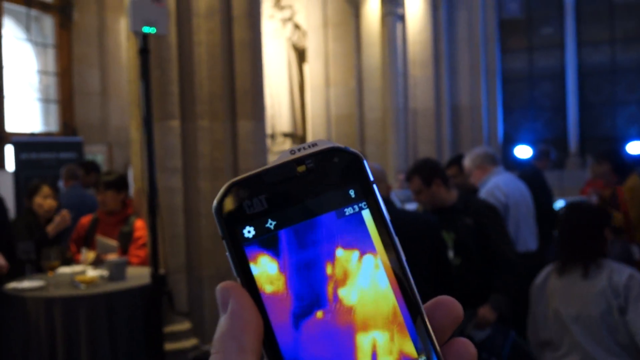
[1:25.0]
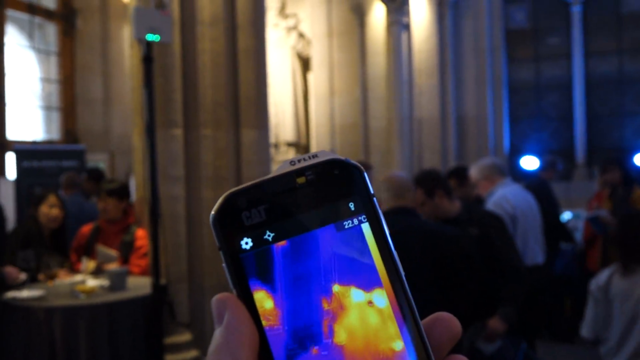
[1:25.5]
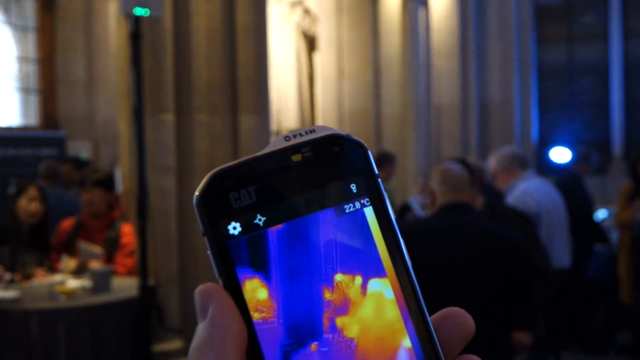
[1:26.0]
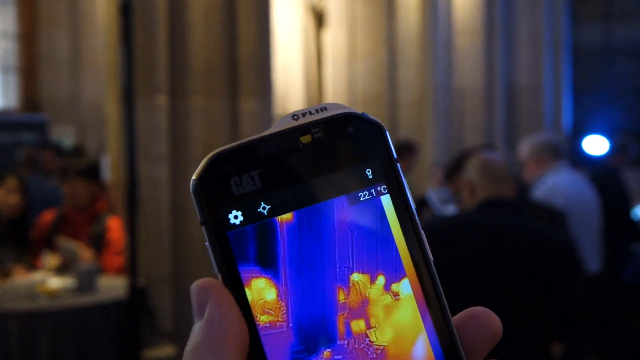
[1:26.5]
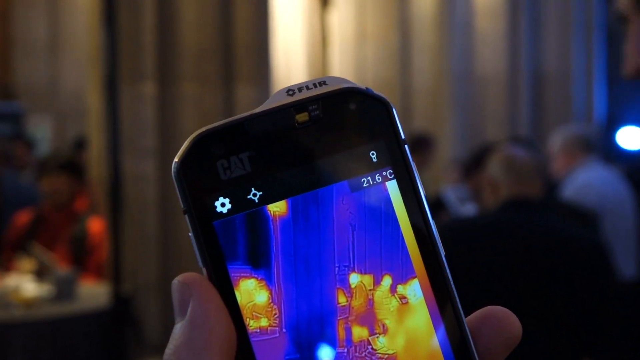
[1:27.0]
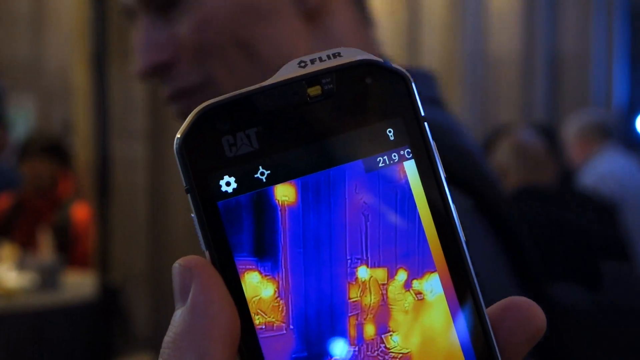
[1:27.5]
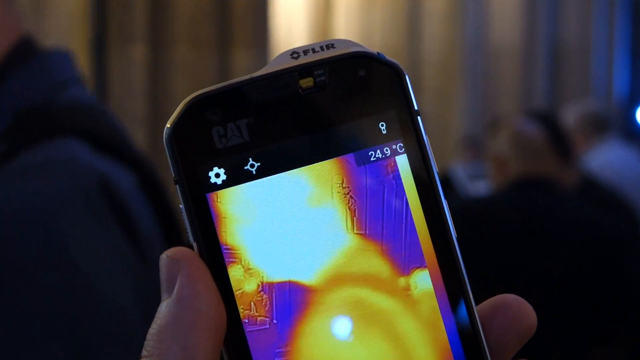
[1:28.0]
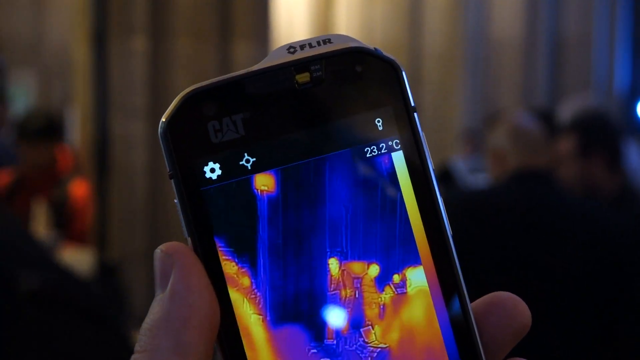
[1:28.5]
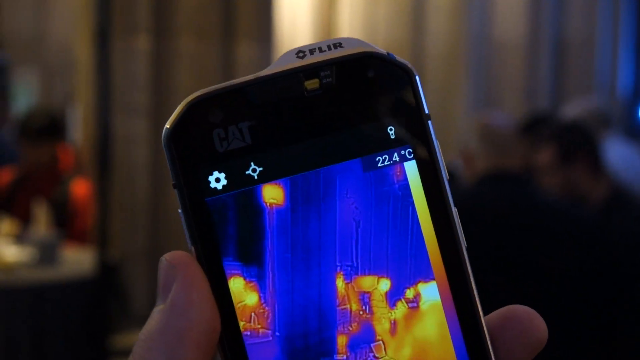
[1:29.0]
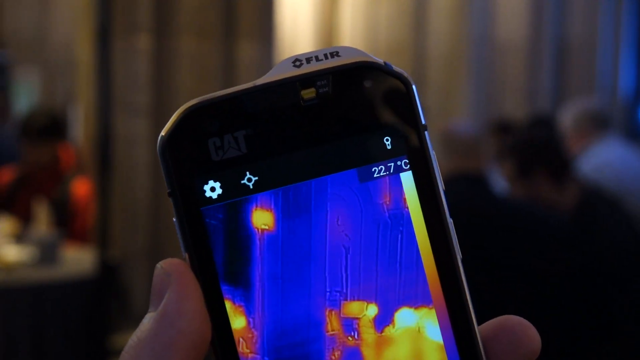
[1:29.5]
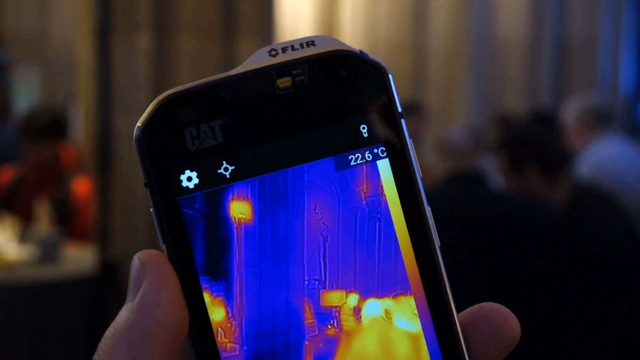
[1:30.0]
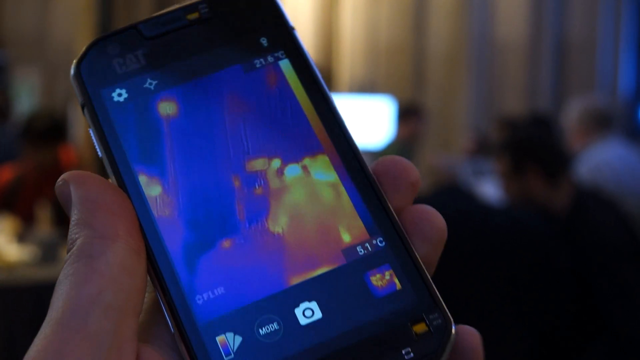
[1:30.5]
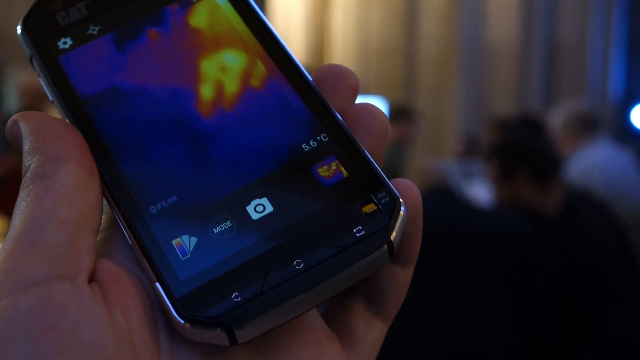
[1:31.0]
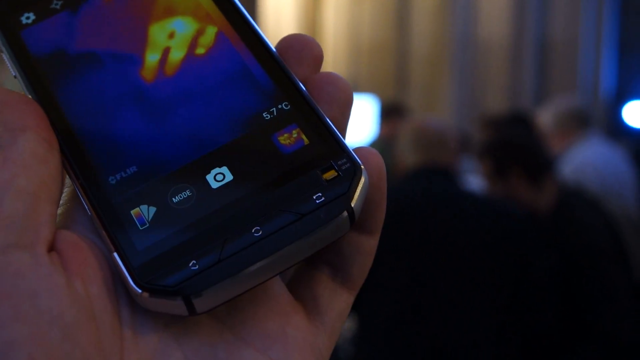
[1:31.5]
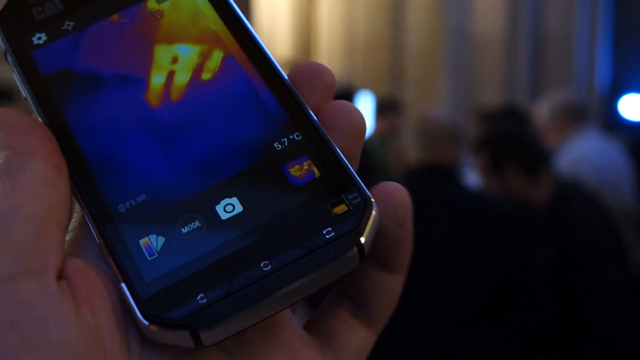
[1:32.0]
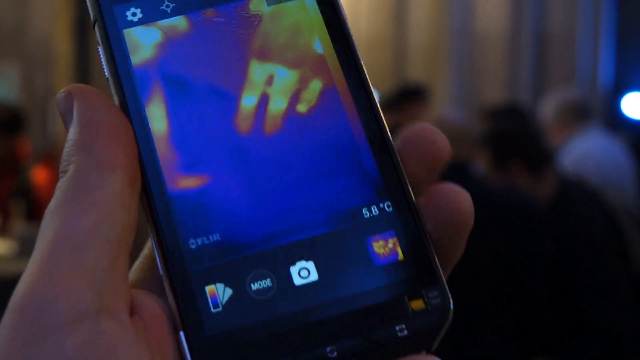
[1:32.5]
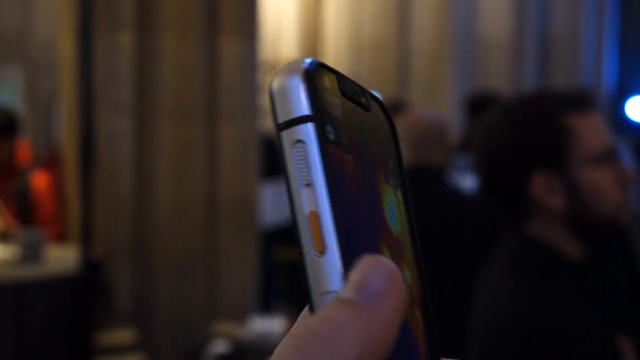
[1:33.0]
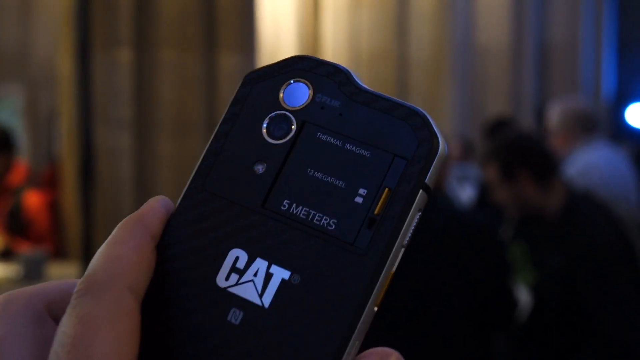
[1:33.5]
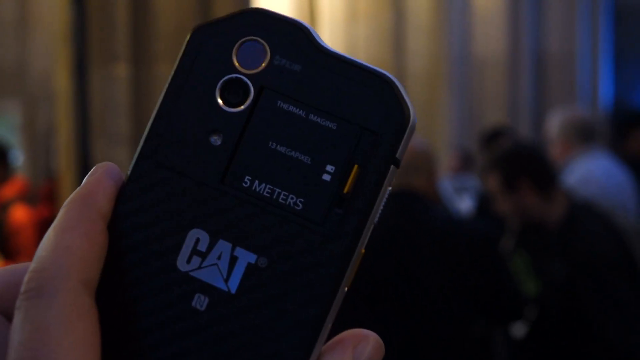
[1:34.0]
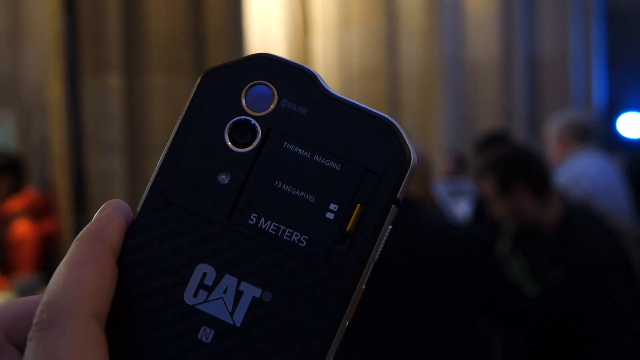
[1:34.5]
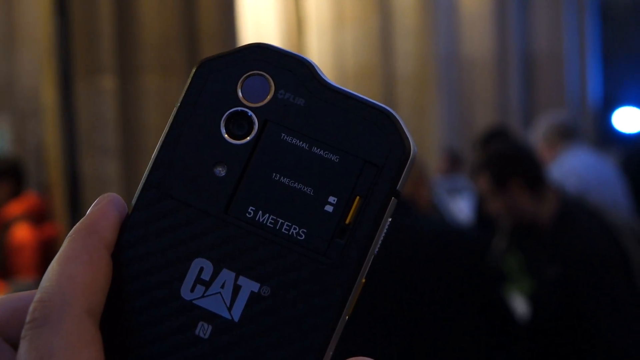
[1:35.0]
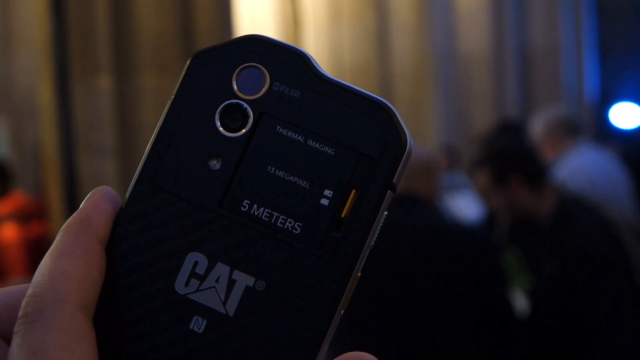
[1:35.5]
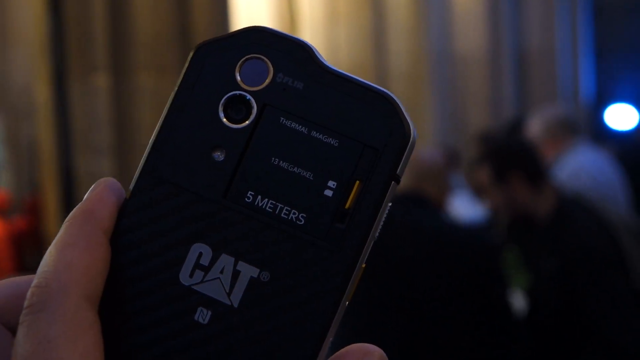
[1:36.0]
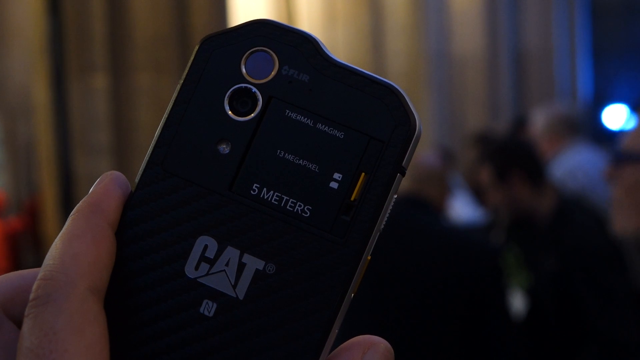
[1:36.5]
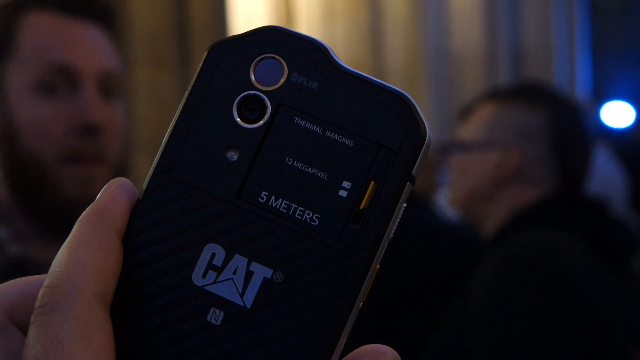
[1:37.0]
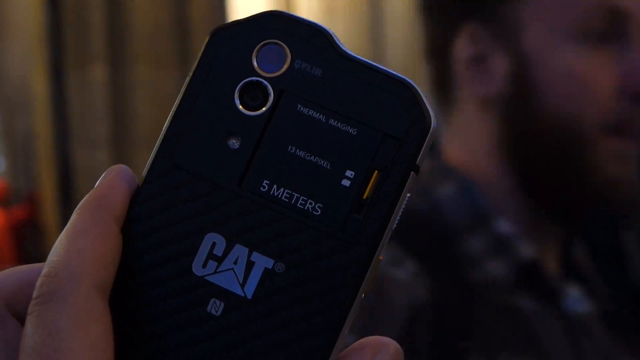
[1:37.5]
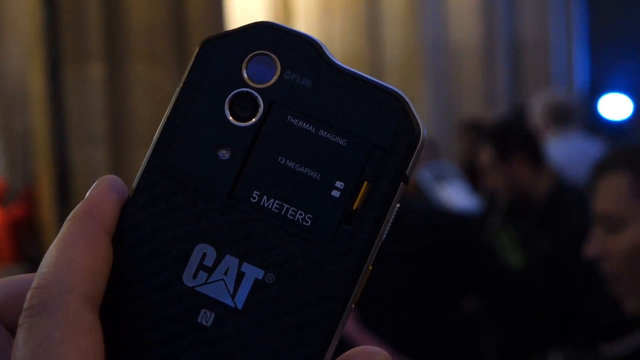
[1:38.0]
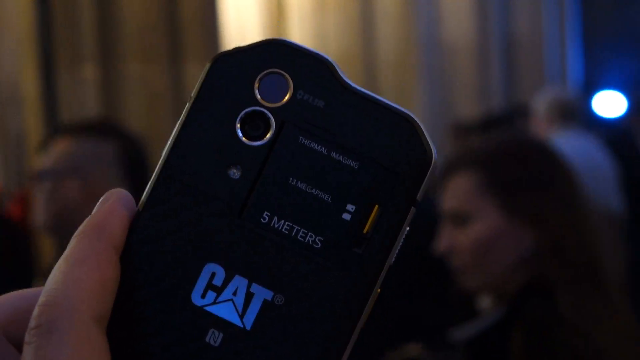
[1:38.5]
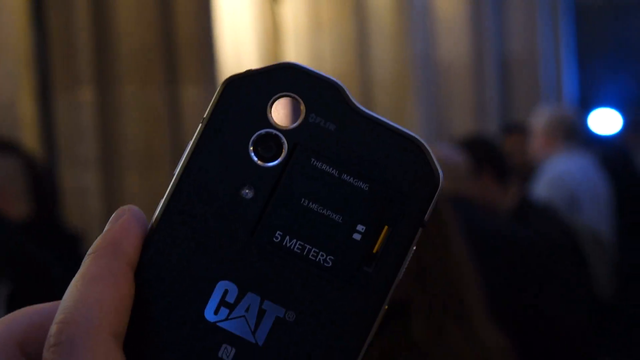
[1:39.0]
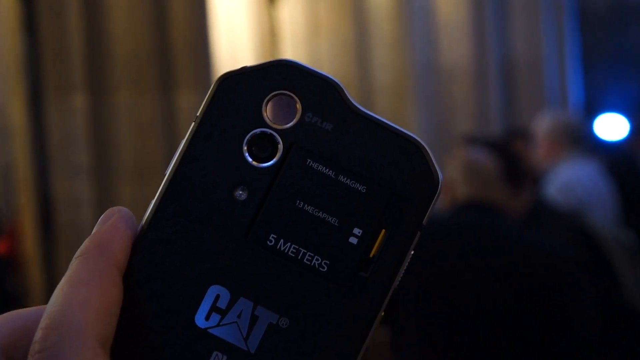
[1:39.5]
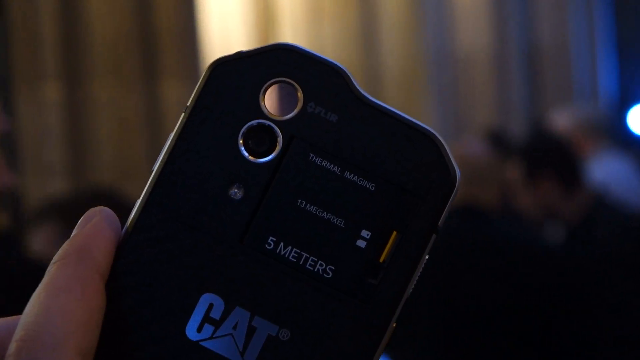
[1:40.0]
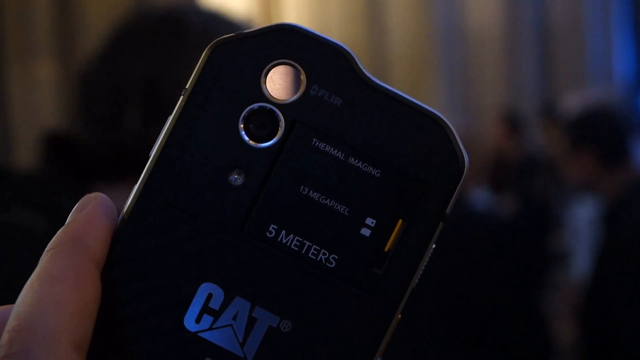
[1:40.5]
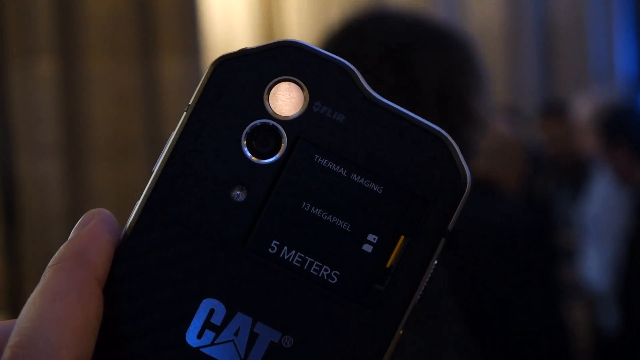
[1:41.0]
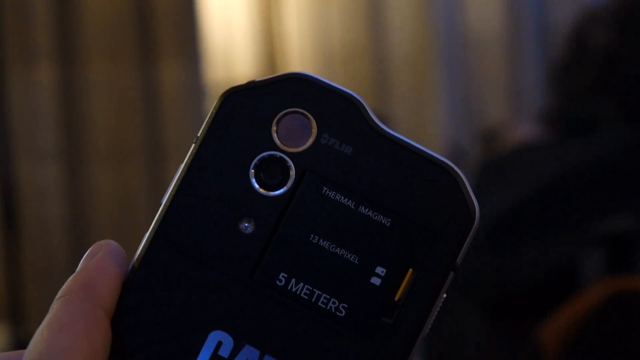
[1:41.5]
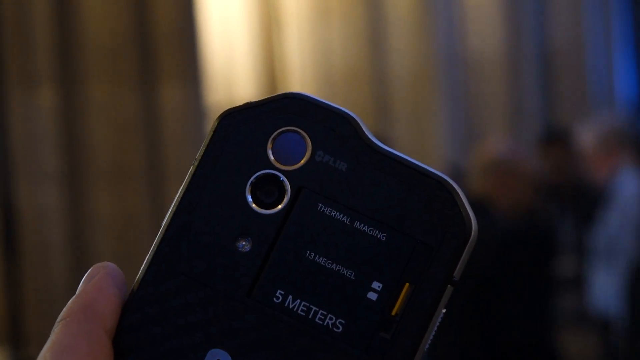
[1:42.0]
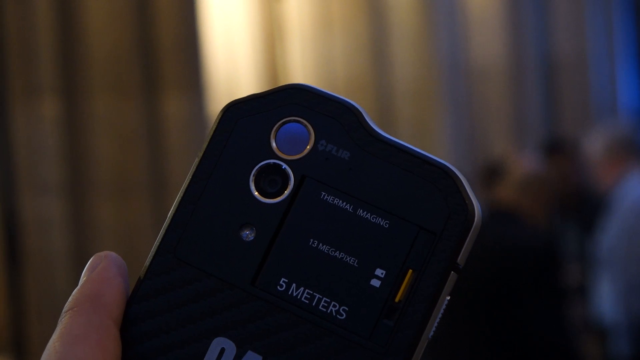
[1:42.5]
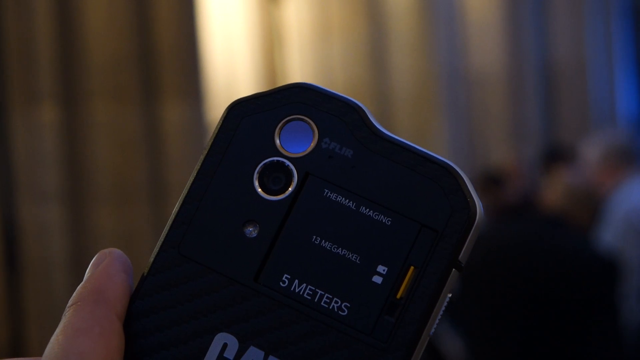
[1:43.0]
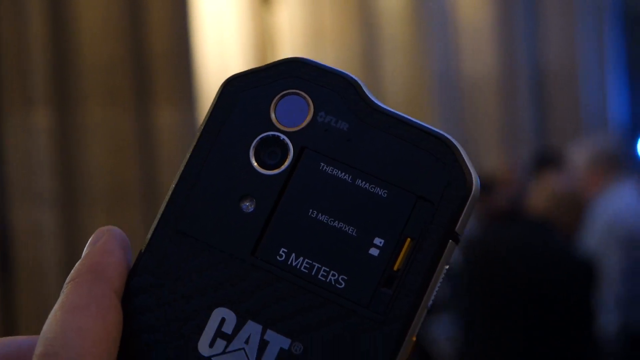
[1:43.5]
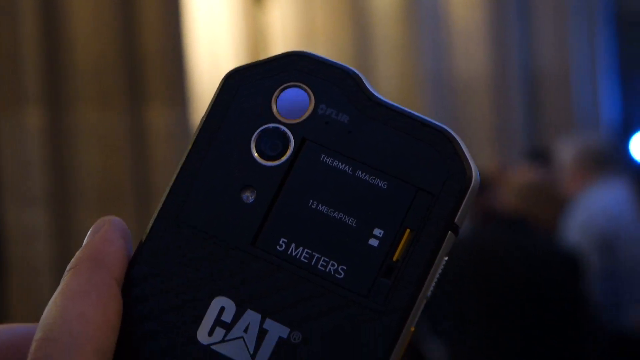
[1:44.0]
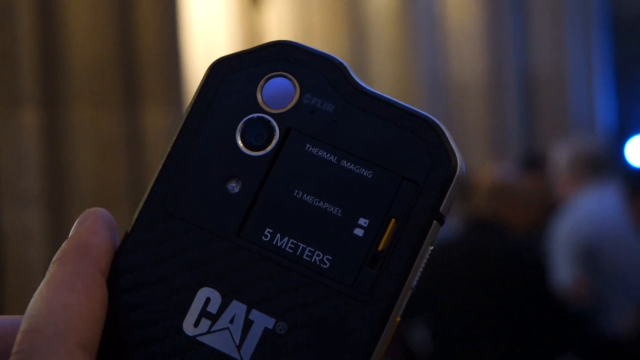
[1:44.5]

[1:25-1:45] The man holds the thermal imaging device and zooms in closer, showing thermal images of a few men and a laptop on the screen. He then kind of tilts the phone back in his hand, and the view zooms in on the bottom of the phone, showing three buttons with different symbols. The on-screen icons are still visible: a phone fanned out, the circle with the word "mode" in it, and the typical camera icon used for taking photos, along with the brand name "FLIR" and the degrees in Celsius. He then flips the phone to the back, showing two glass holes, apparently camera lenses, the words "thermal imaging" in white lettering, beneath that "13 megapixel", below that "5 meters", and in very large thick lettering "CAT". The view zooms in on the back of the phone.